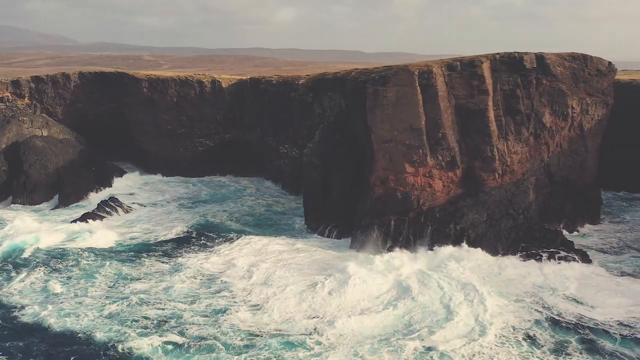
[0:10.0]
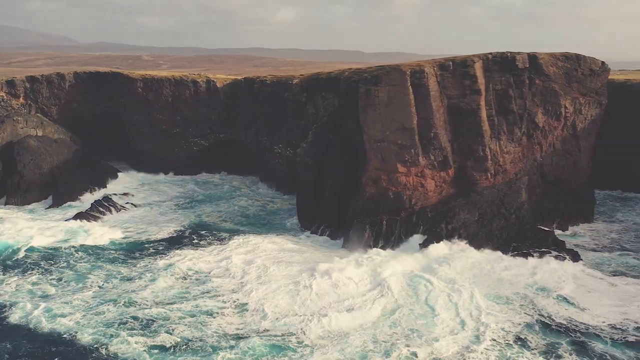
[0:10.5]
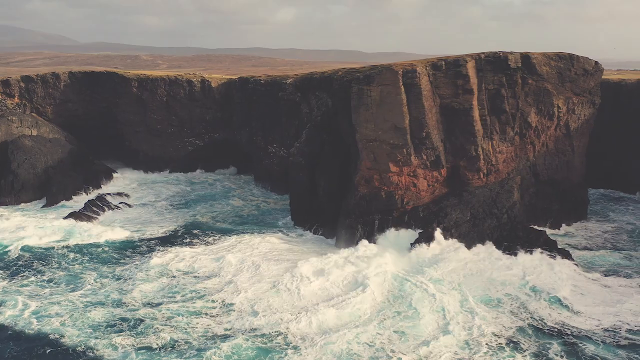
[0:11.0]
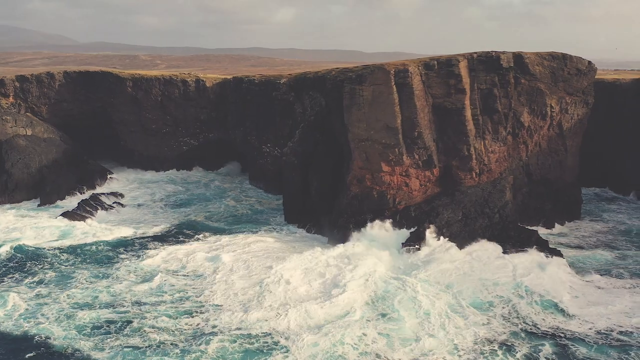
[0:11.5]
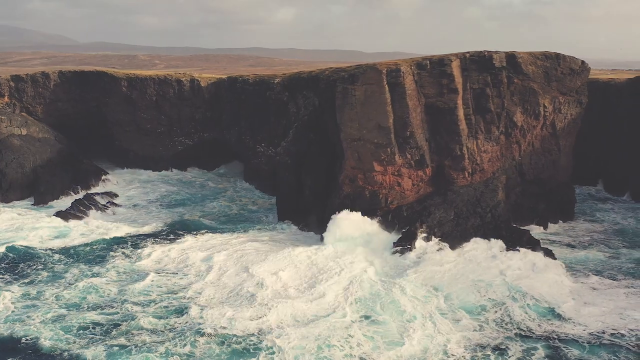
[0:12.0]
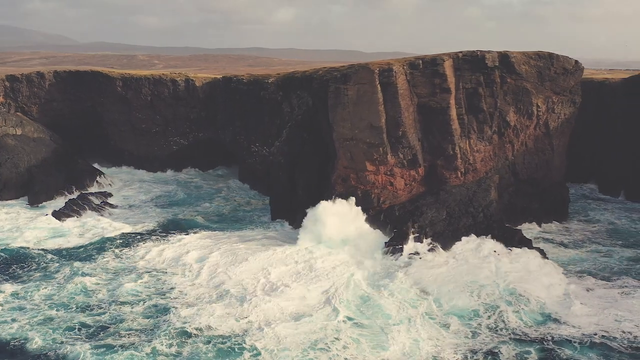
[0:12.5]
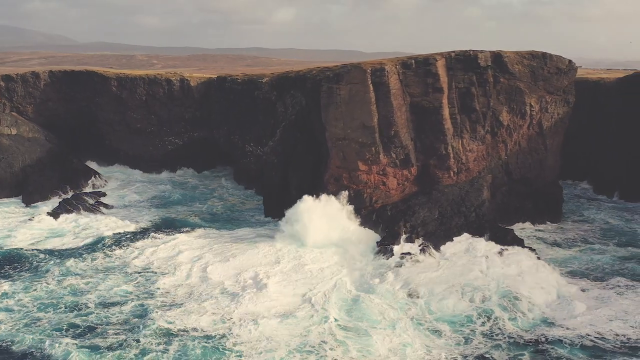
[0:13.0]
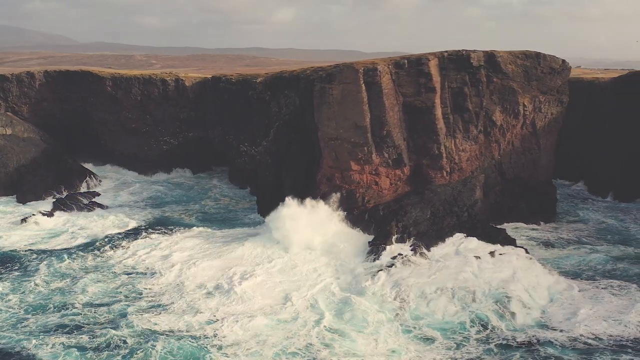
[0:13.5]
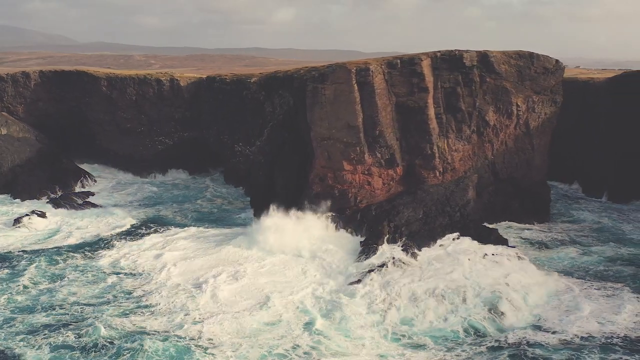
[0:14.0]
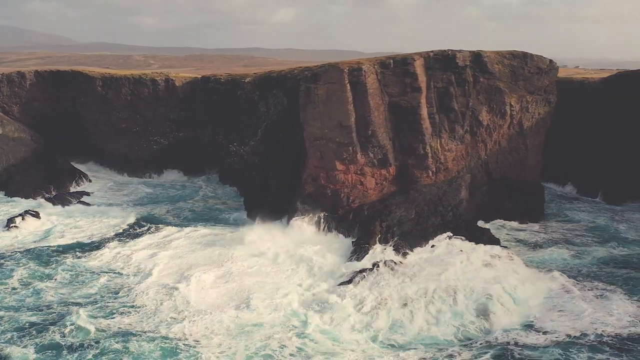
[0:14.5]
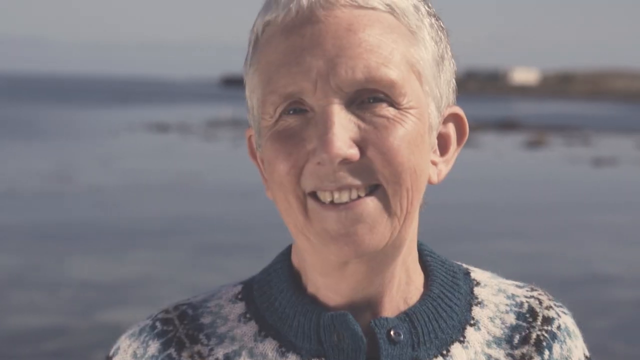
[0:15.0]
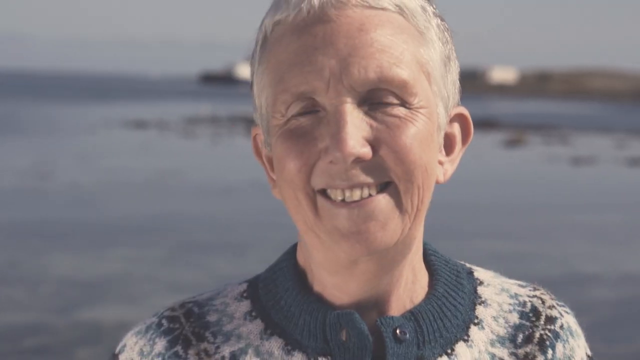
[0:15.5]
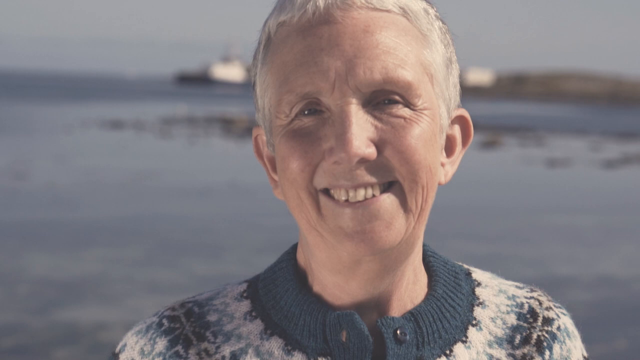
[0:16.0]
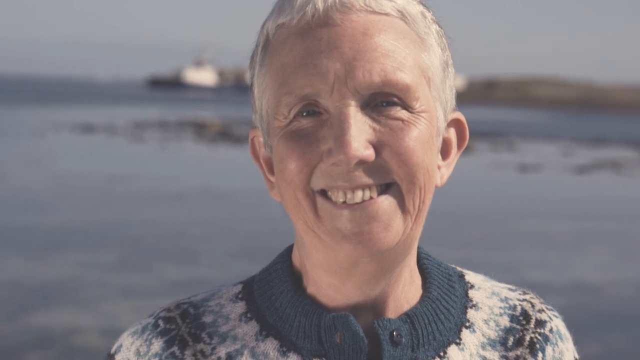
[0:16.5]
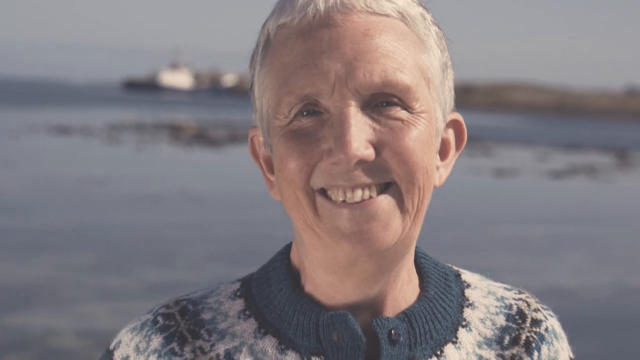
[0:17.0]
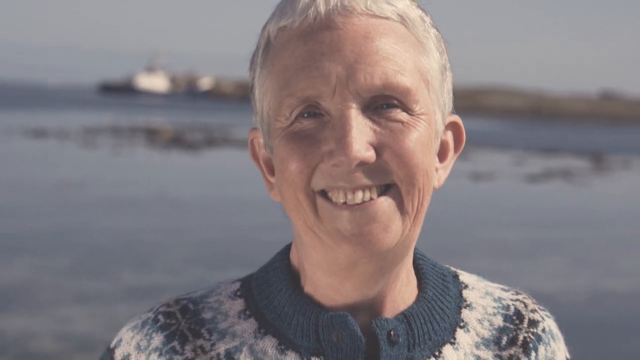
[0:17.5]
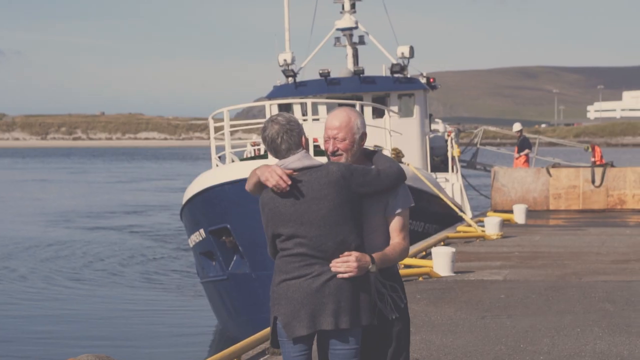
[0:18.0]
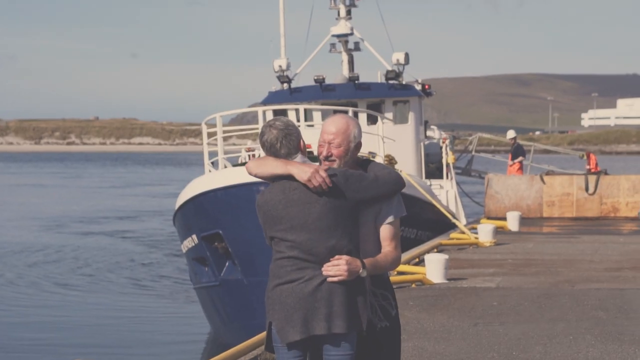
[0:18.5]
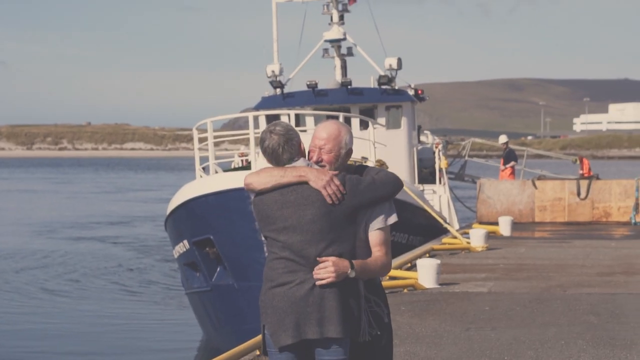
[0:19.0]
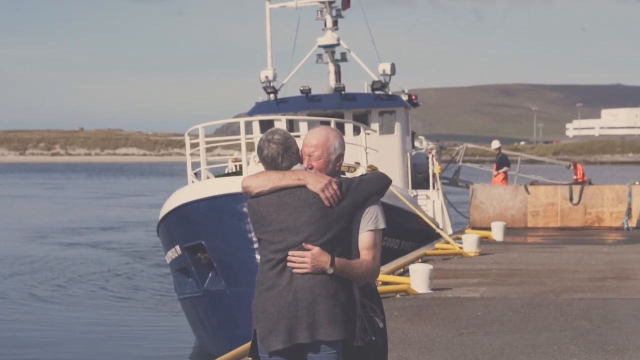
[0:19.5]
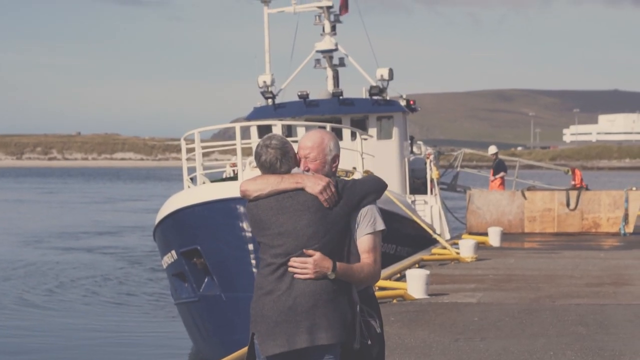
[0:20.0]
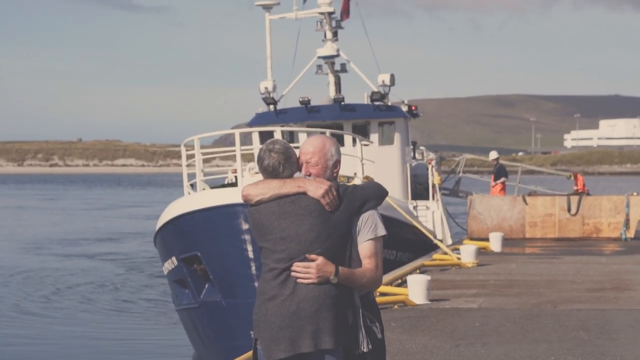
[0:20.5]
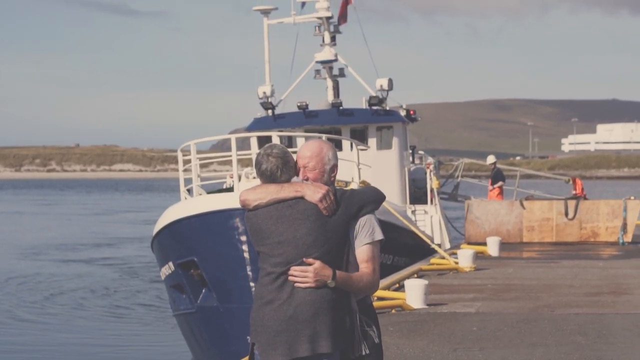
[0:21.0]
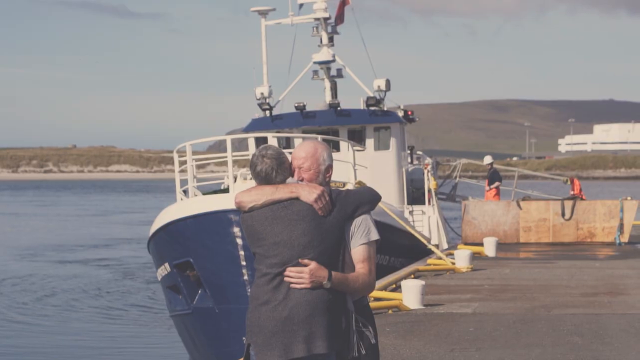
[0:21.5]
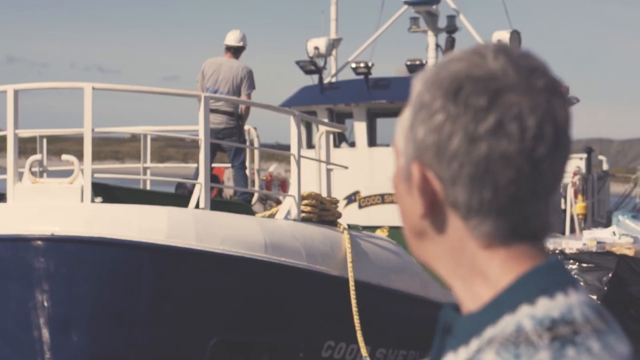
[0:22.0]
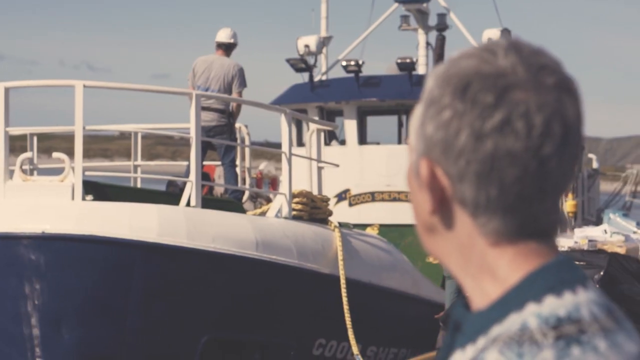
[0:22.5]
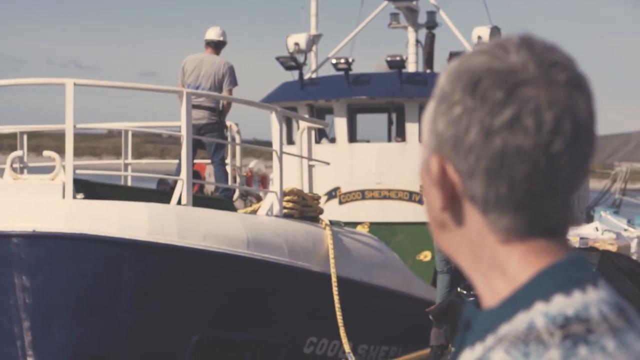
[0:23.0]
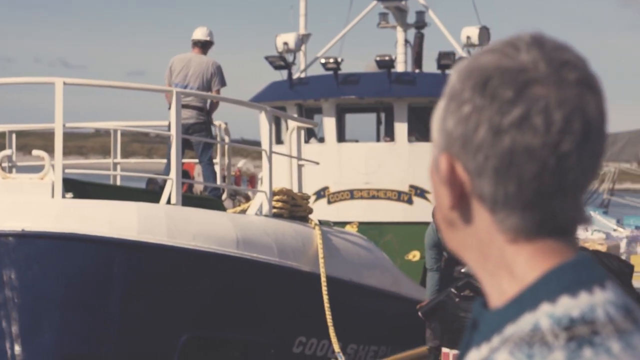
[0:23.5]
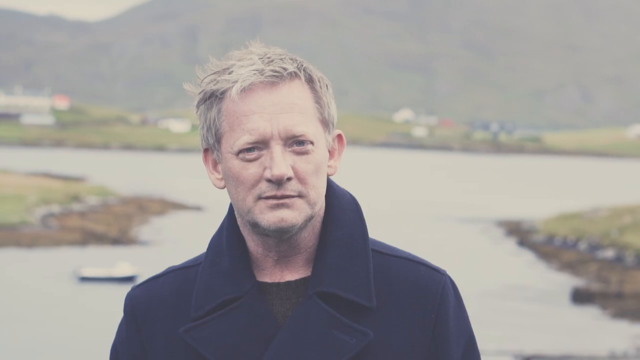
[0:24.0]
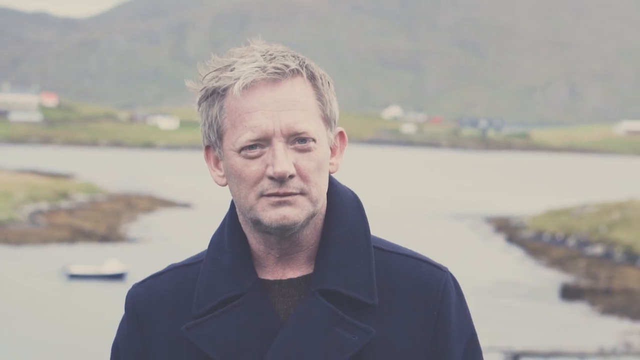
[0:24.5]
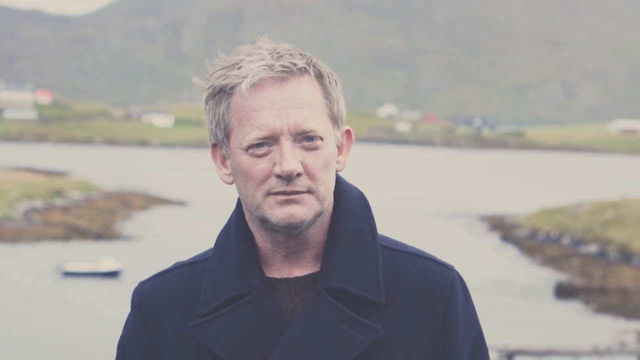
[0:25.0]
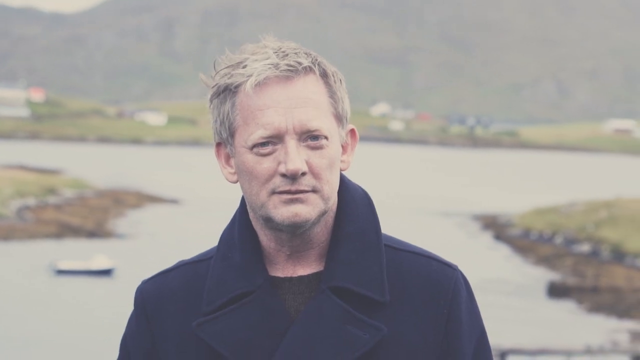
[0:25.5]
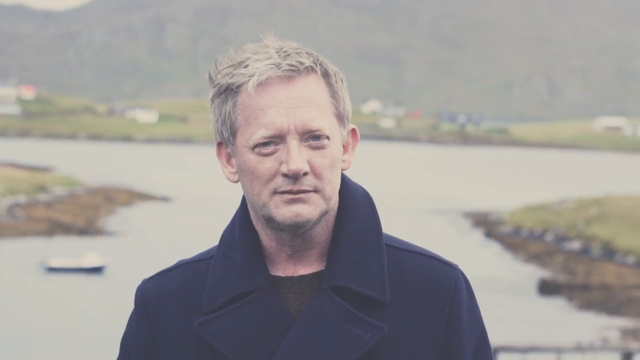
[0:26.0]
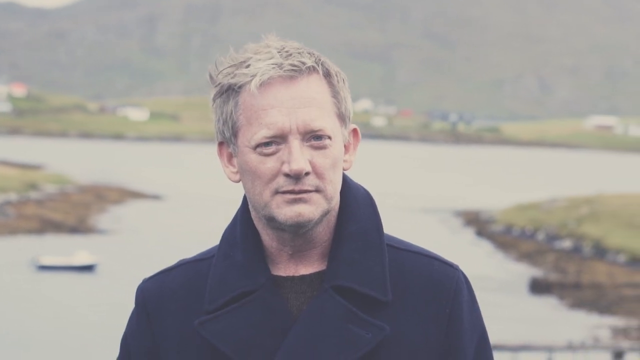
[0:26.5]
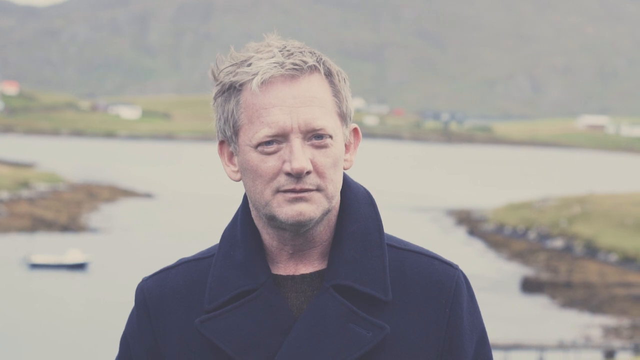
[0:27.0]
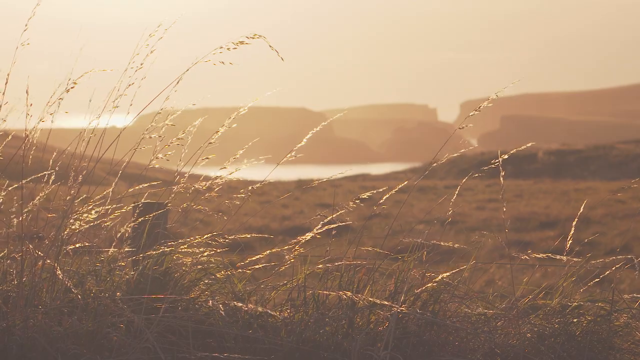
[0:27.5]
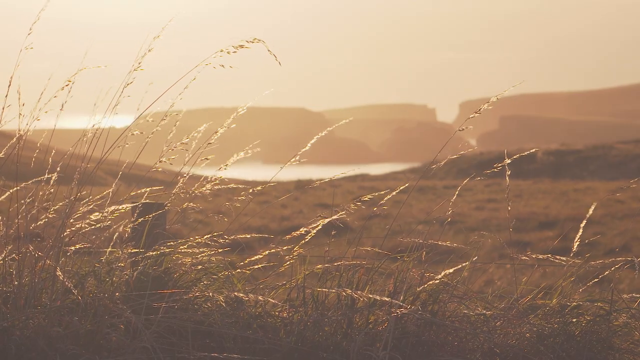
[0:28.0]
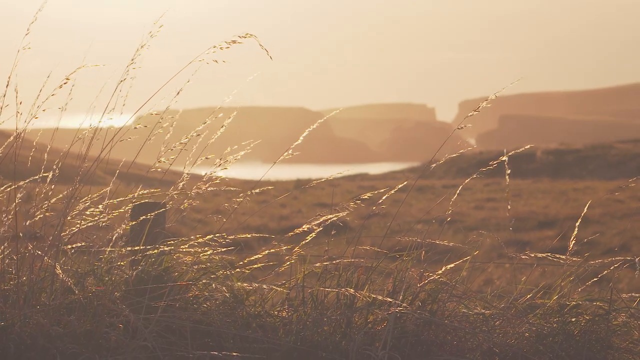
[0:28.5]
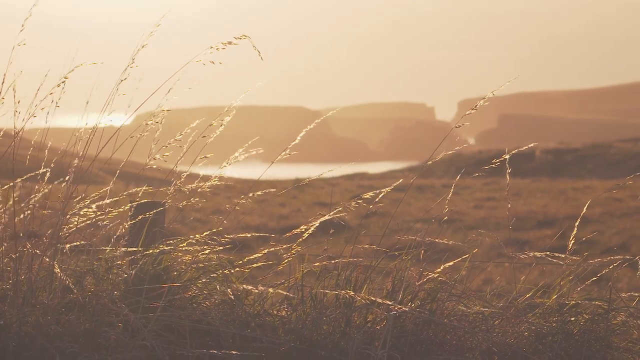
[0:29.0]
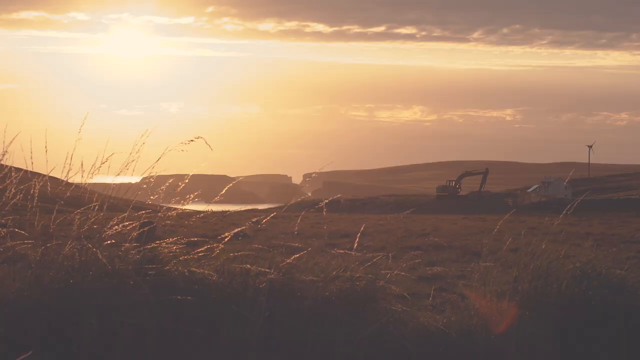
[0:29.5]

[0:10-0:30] The camera pans right across the mountain cliffside with waves bashing against it. It cuts to an older woman smiling, with short cropped grey hair and a blue-white patterned cardigan or knitted sweater; behind her is the ocean, with a cliffside in the background. The camera pans right, then cuts to an old man and the woman embracing in a hug. The old man has a beard, a blue shirt and a watch on his left hand. He is smiling, and there is a boat behind him. The blue and white boat looks to be around 45 to 50 feet long and is on the side of a harbor, moored to one of the pegs in the ground. A man in orange overalls, a blue top and a hard hat is going onto the boat via a little bridge. The video cuts to the woman staring at the boat, with a man stood on deck in a grey t-shirt and a white hard hat, then cuts to another man standing and looking at the camera with the Shetland landscape behind him: the ocean with green grassy landscape around. Finally it cuts to a scene of fields with the sun looking like it is going down and the grass blowing; the ambient light is very orange as the sun starts to set.